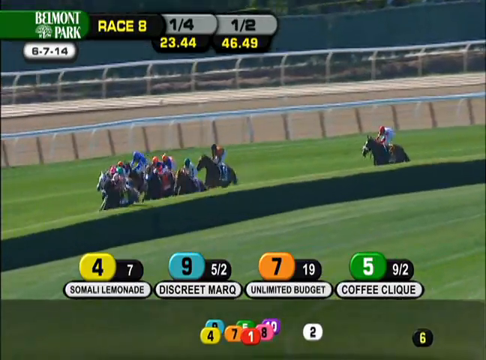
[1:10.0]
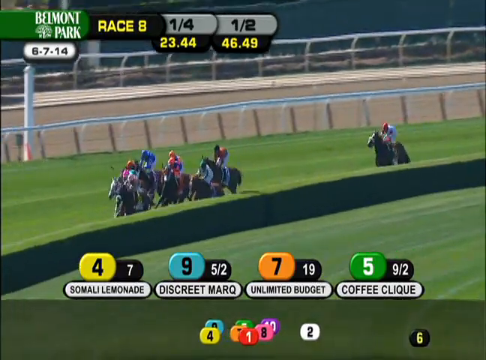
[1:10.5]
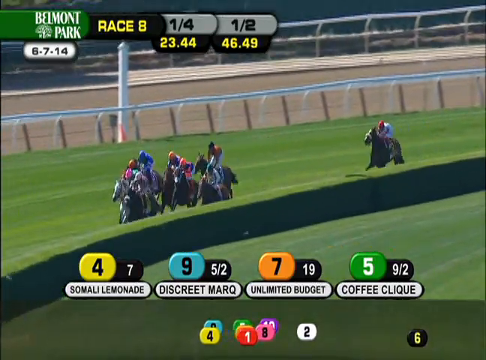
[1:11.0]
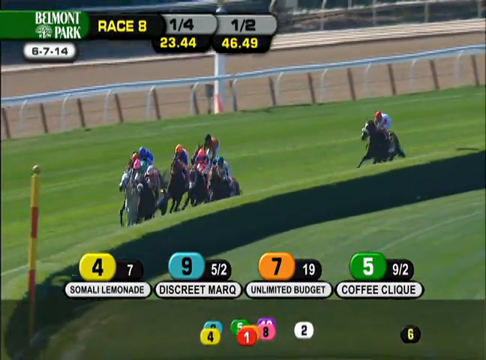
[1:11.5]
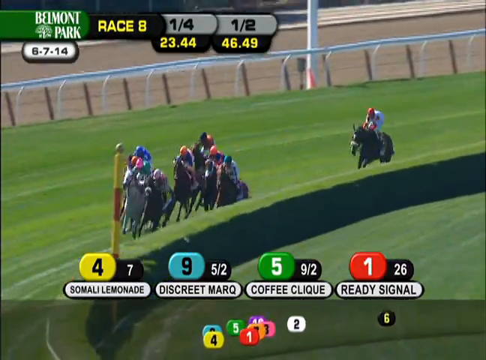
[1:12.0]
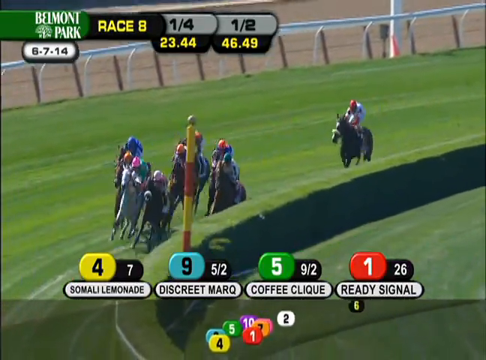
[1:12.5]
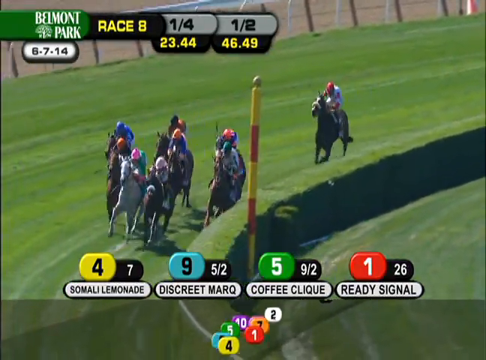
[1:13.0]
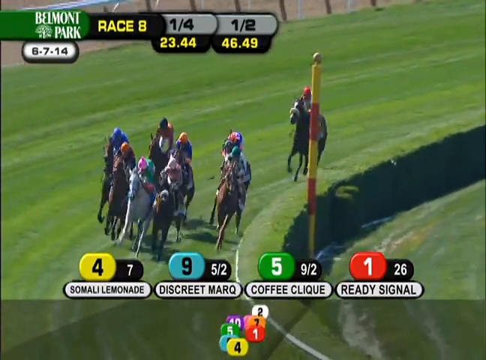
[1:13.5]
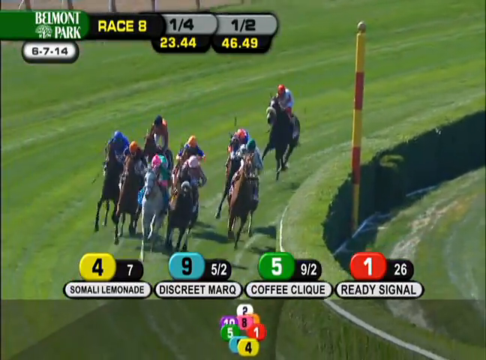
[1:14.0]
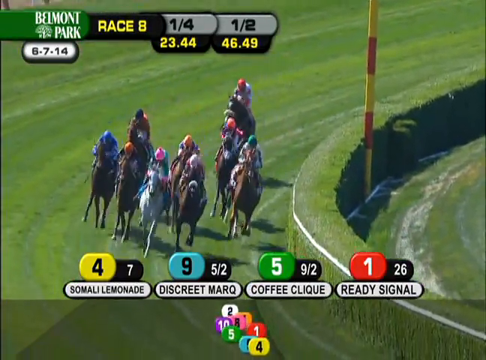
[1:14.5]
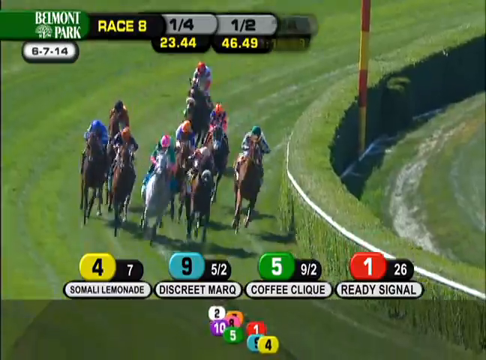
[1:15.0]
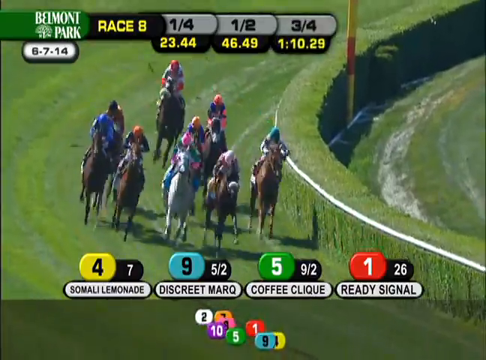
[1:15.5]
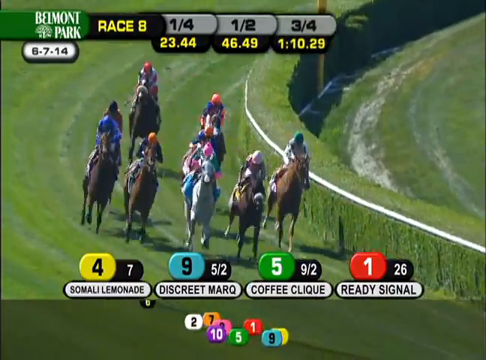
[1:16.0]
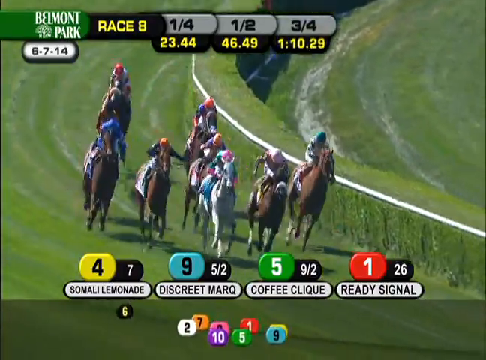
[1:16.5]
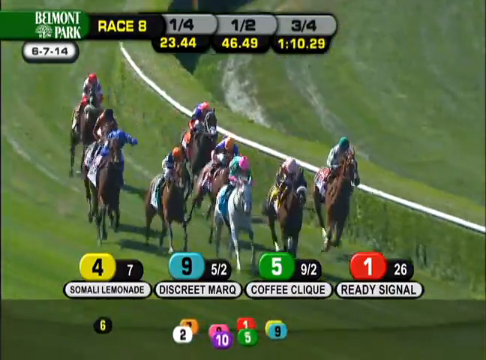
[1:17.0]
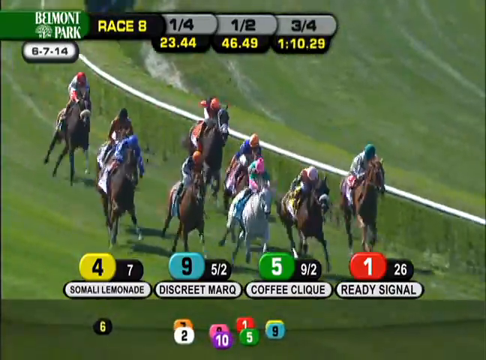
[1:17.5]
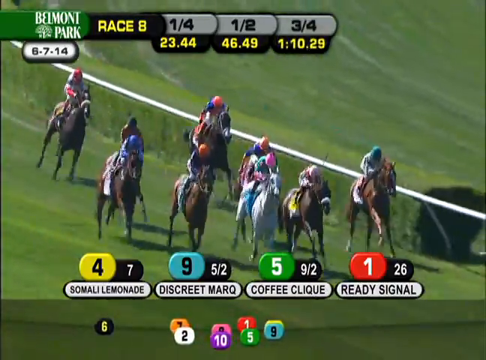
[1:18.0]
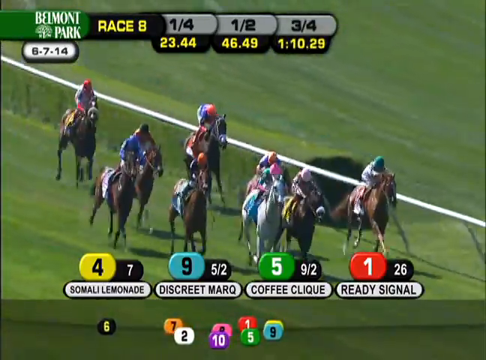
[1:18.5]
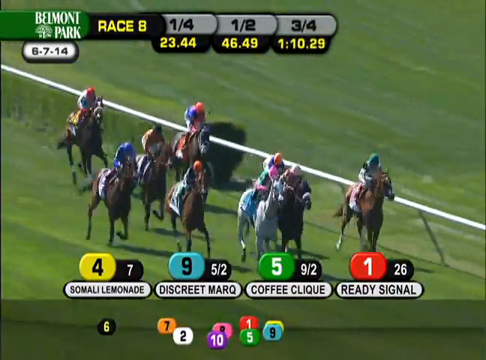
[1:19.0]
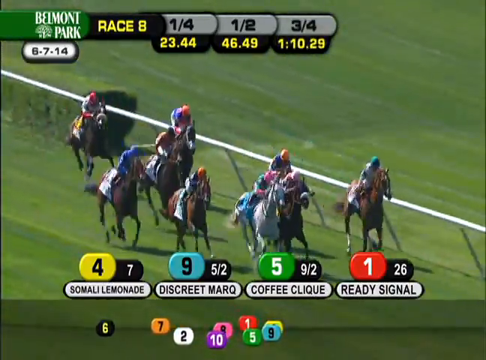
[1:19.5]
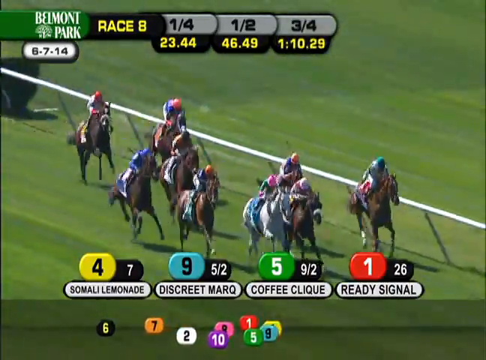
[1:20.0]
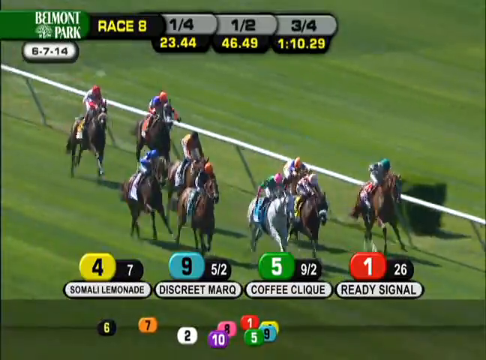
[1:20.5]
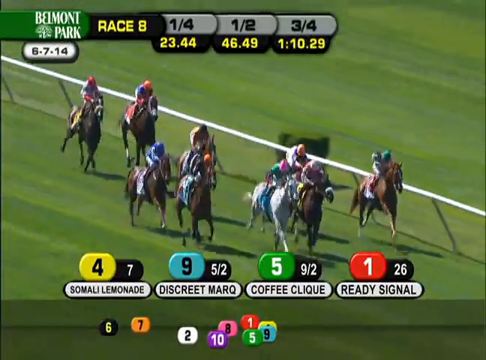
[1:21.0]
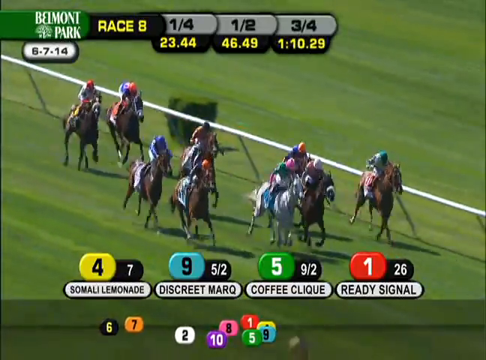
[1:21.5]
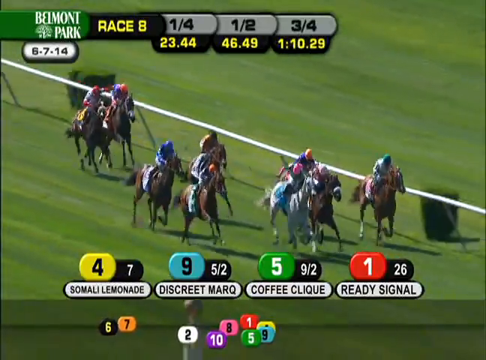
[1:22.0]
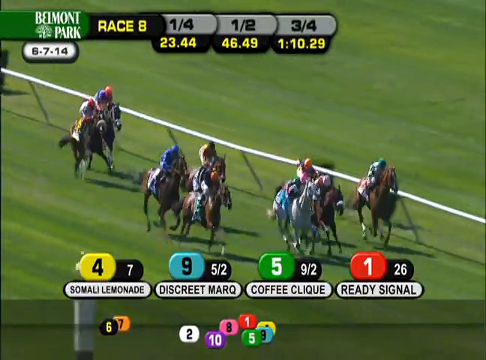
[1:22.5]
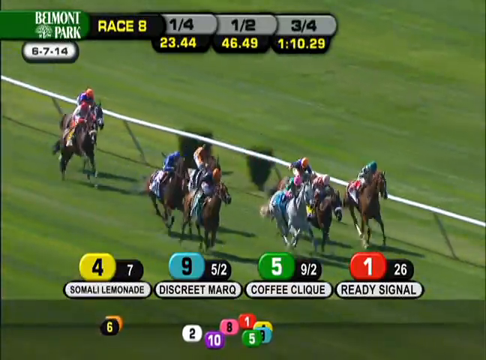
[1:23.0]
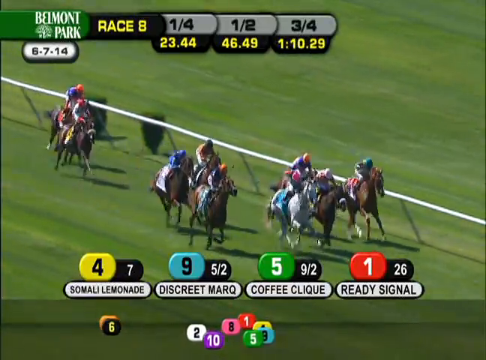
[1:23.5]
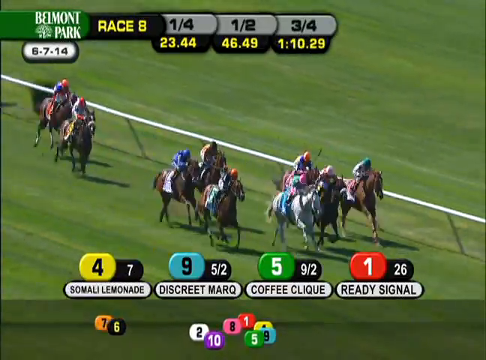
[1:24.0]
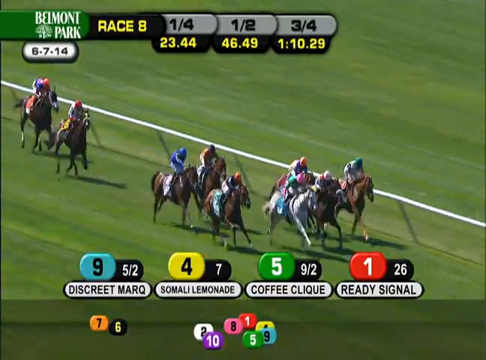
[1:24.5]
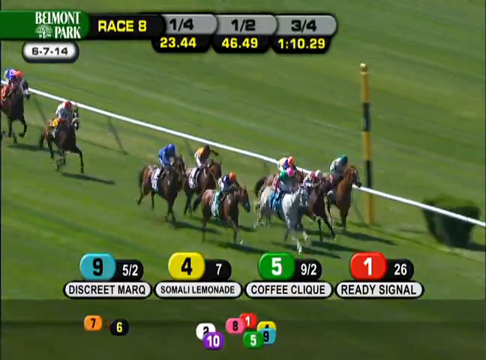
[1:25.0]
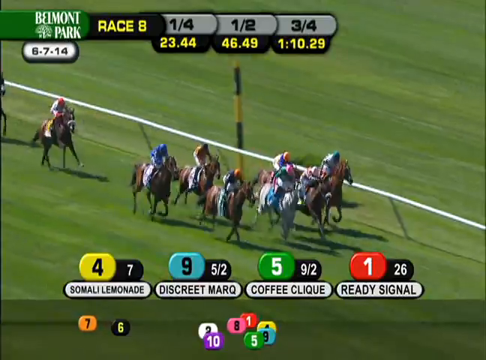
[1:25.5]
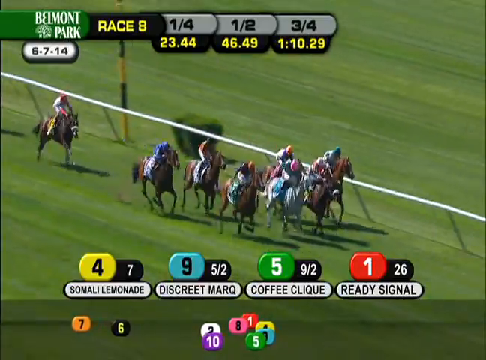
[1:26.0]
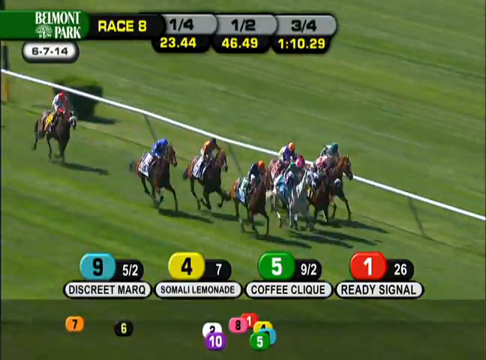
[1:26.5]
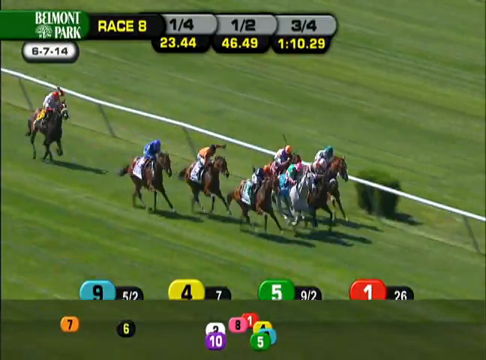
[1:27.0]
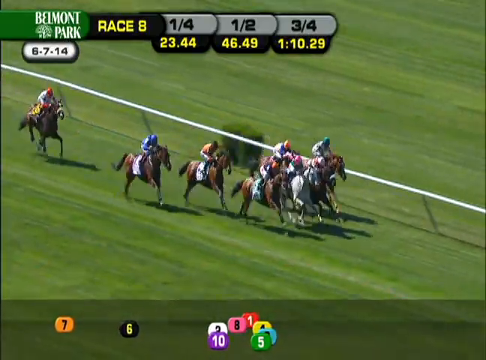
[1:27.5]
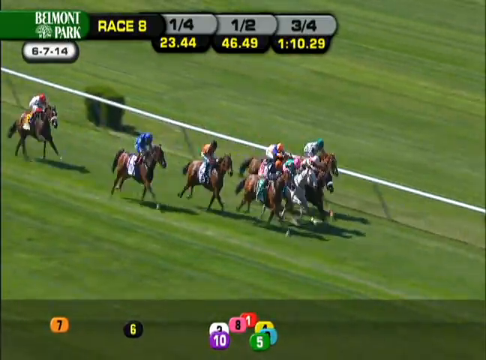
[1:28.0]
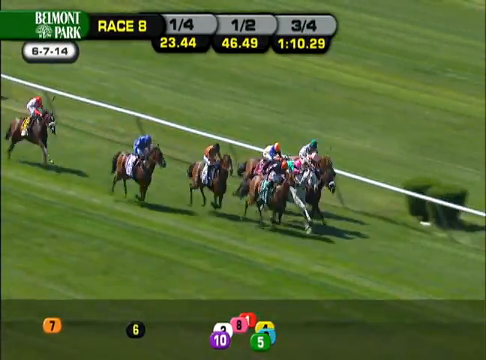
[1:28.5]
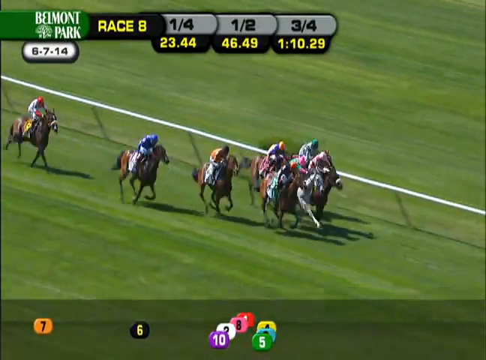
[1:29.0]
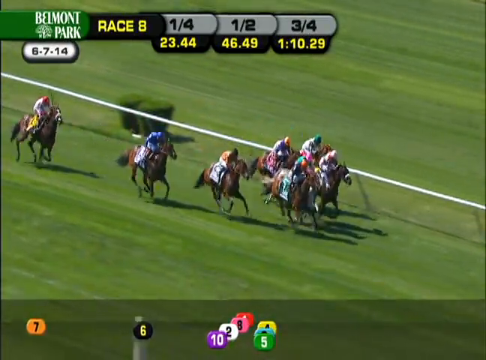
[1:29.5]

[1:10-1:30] The race at Belmont Park on June 7th, 2014 continues with 10 horses. At the bottom of the screen are icons, each a different color, numbered 1 through 10, which get closer and farther from each other in real time to show the horses' relative positions. Above them, four icons with names show the current top four: horse number 4, Somali Lemonade, in first place, followed by horse number 9, Discreet Mark, in second, horse number 5, Coffee Click, in third, and horse number 1, Ready Signal, in fourth. The horses begin taking a turn along a curved section of the racetrack and cluster together more closely. Somali Lemonade's lead shrinks, and Discreet Mark overtakes Somali Lemonade, moving into first place.